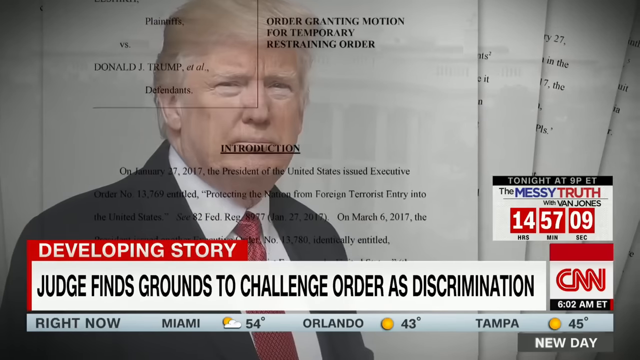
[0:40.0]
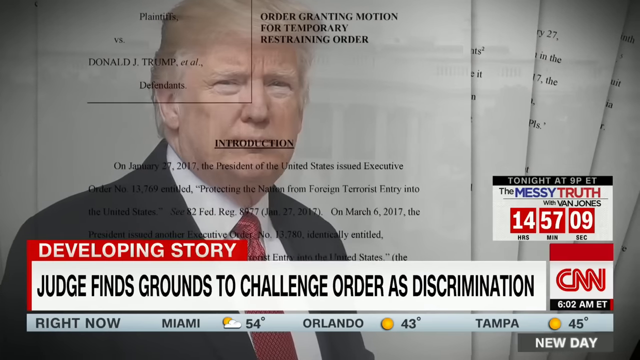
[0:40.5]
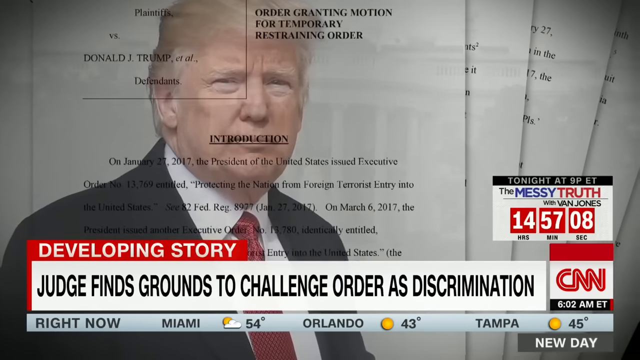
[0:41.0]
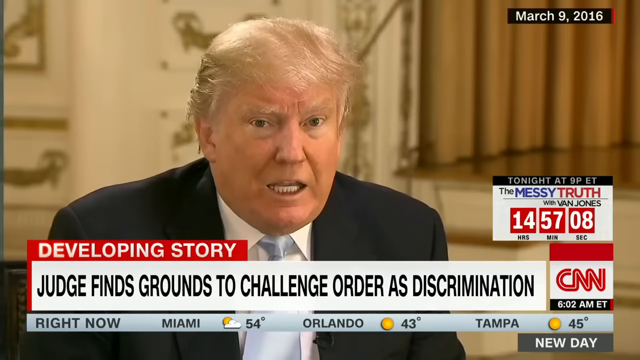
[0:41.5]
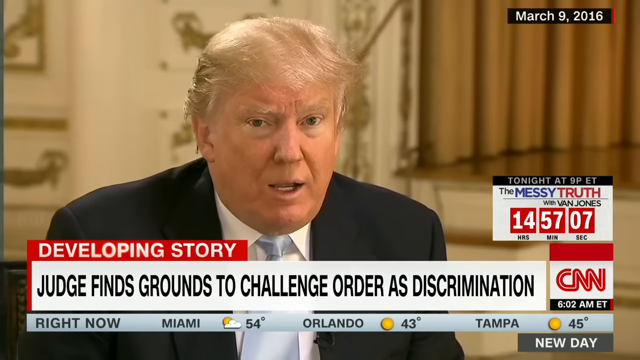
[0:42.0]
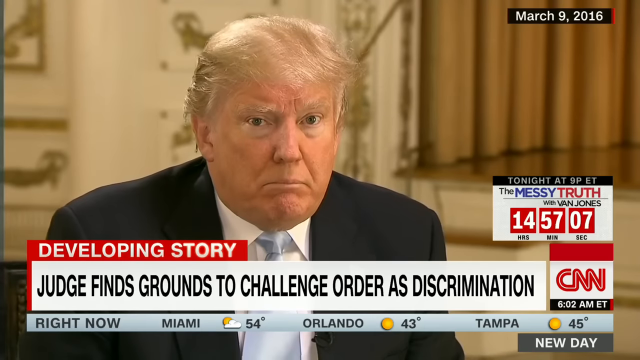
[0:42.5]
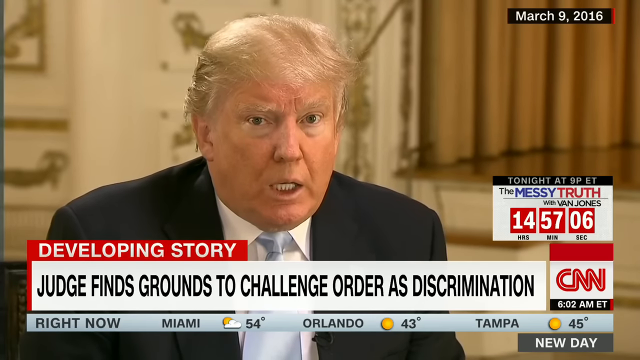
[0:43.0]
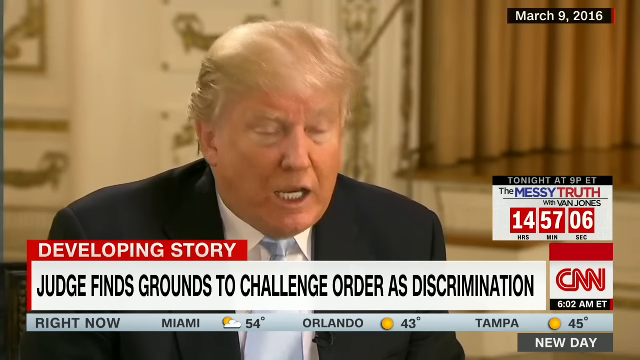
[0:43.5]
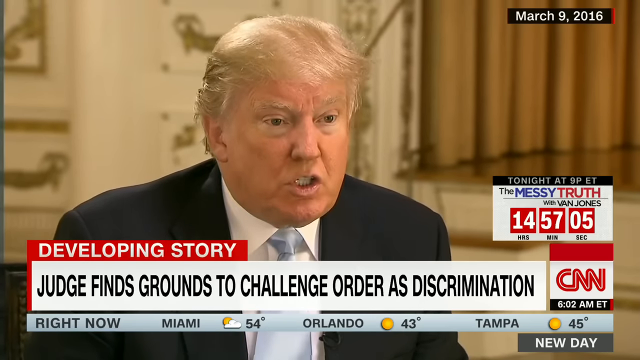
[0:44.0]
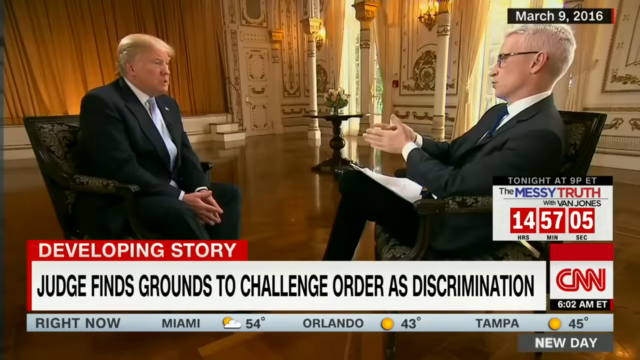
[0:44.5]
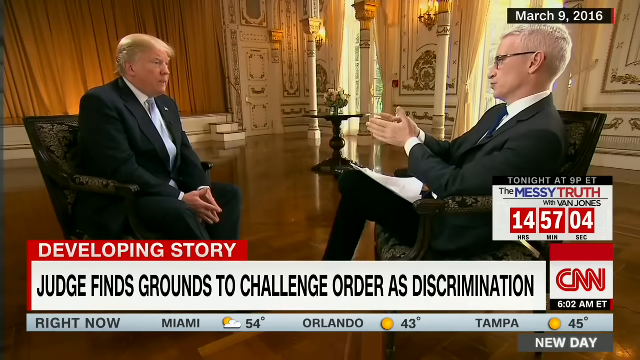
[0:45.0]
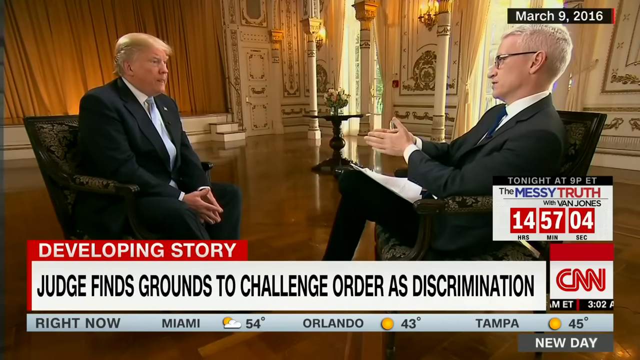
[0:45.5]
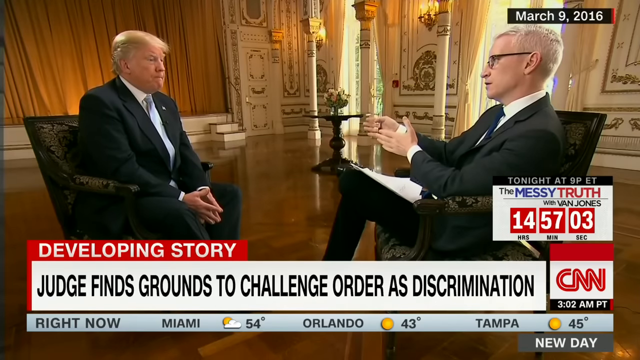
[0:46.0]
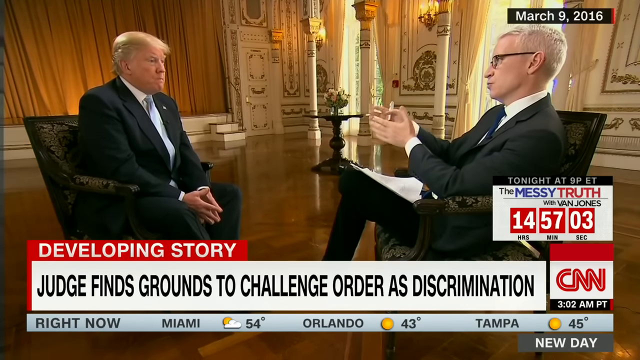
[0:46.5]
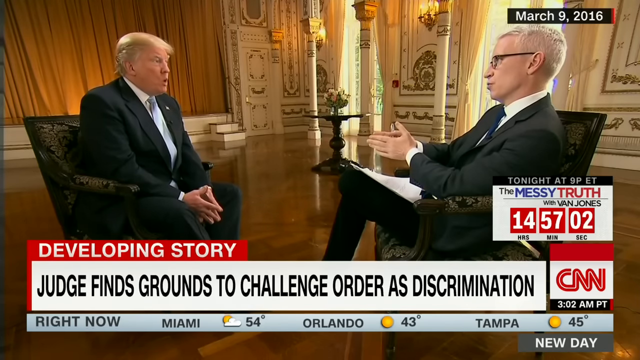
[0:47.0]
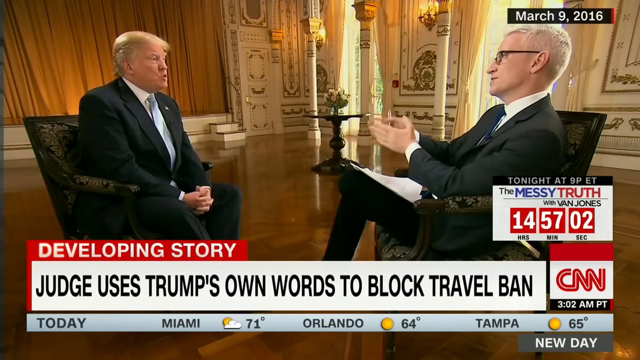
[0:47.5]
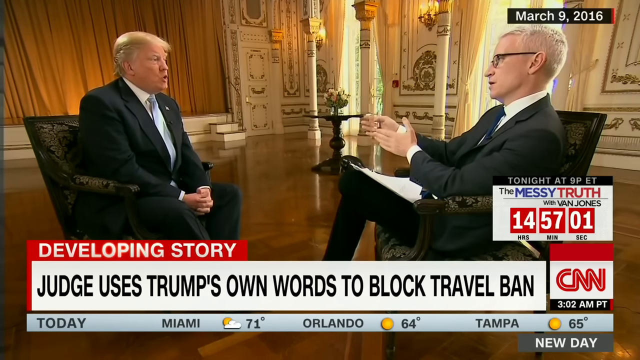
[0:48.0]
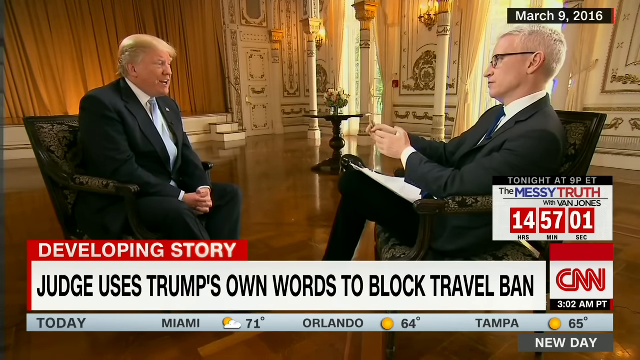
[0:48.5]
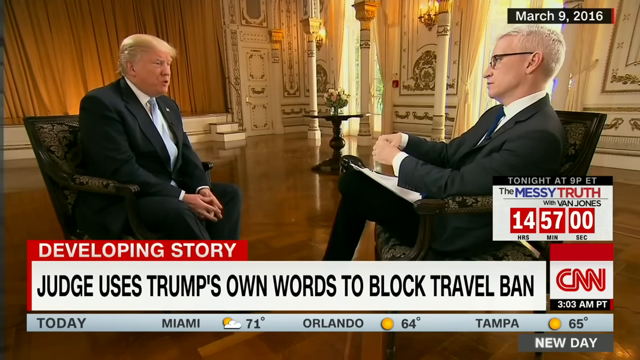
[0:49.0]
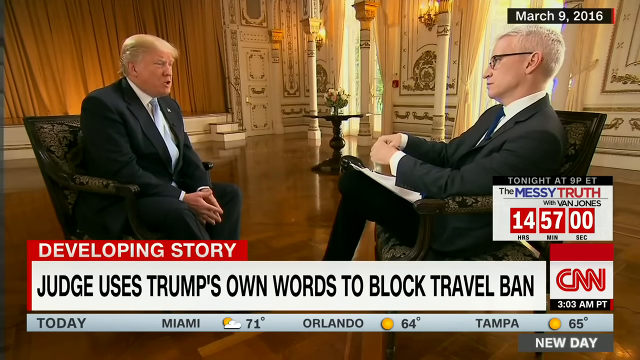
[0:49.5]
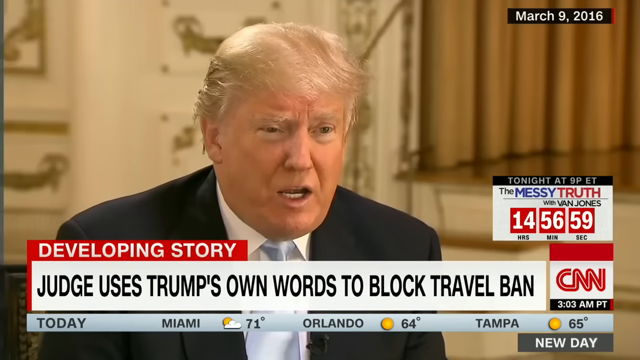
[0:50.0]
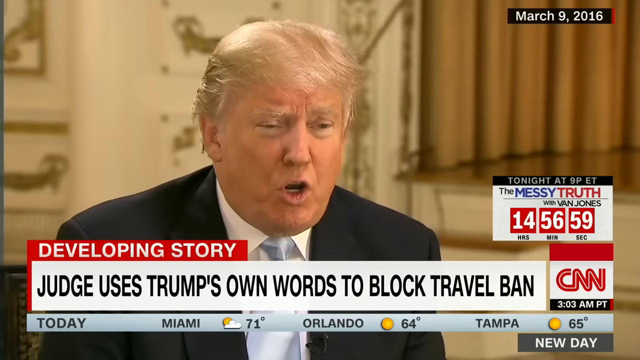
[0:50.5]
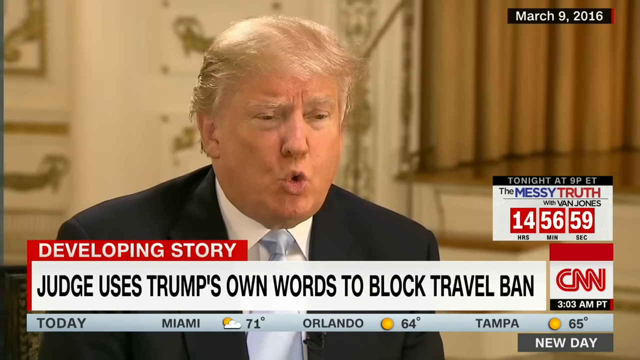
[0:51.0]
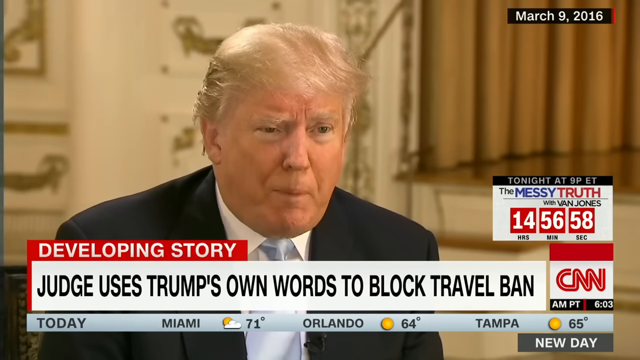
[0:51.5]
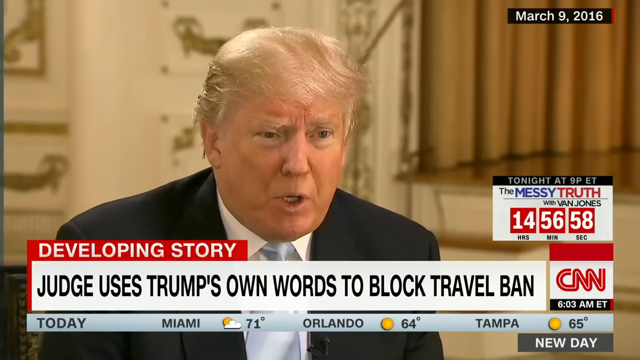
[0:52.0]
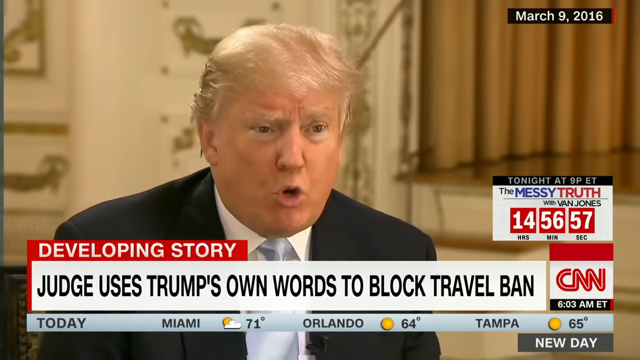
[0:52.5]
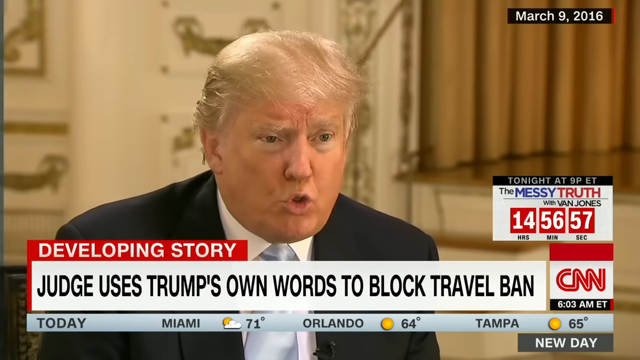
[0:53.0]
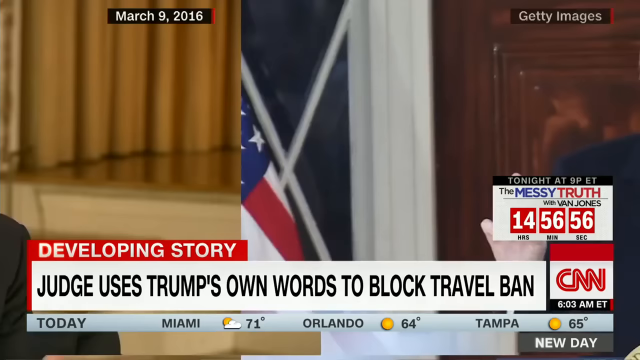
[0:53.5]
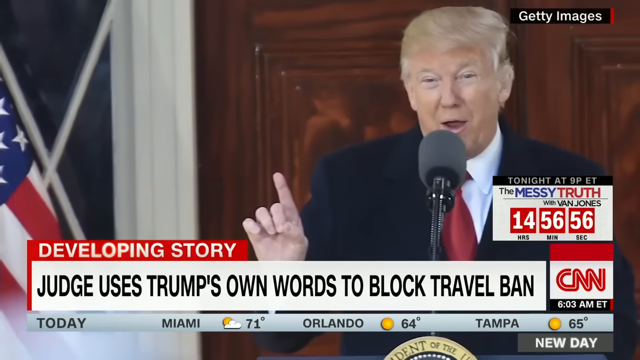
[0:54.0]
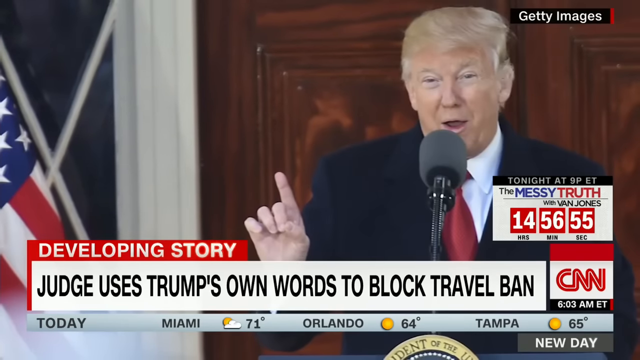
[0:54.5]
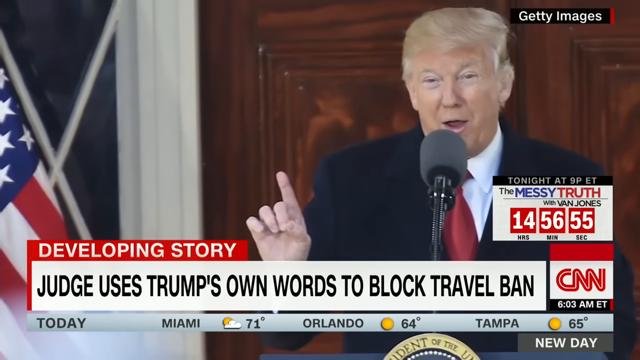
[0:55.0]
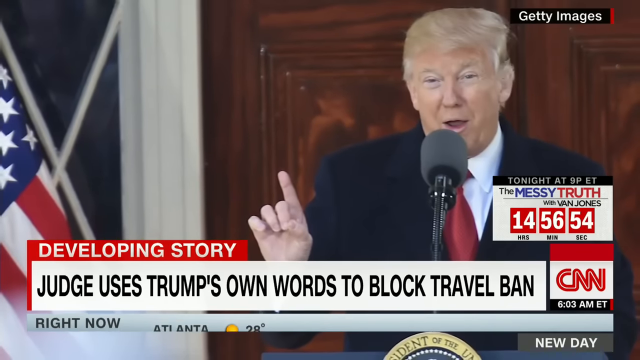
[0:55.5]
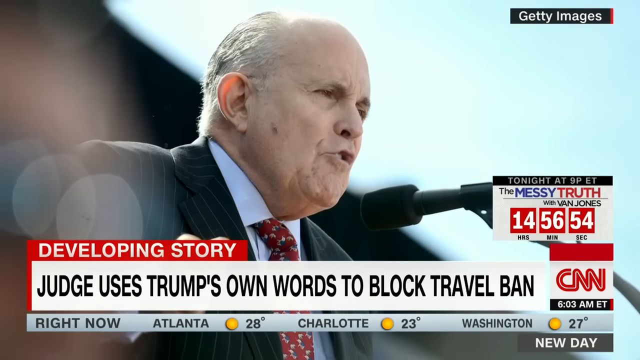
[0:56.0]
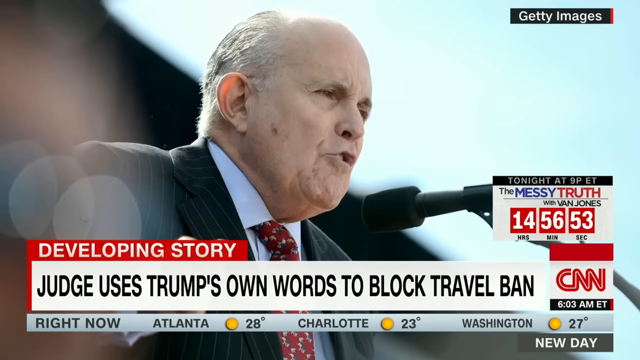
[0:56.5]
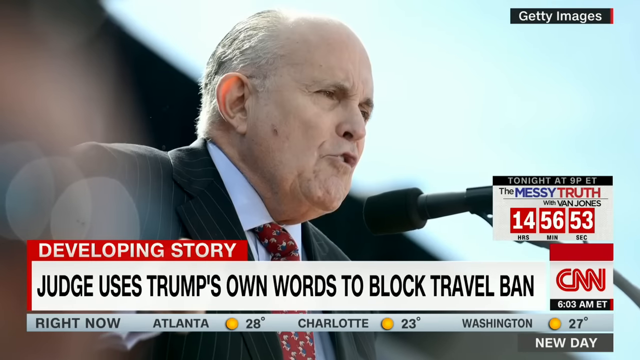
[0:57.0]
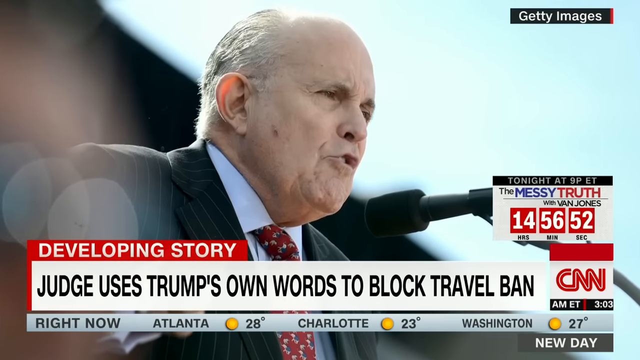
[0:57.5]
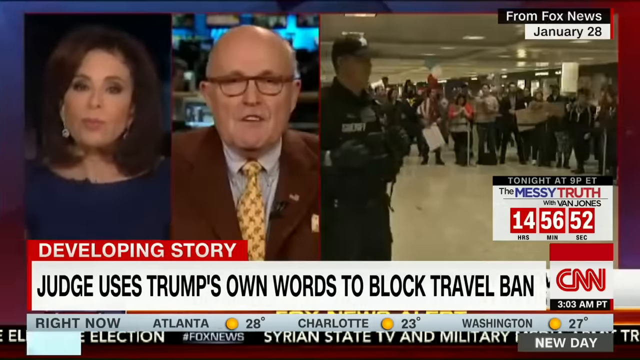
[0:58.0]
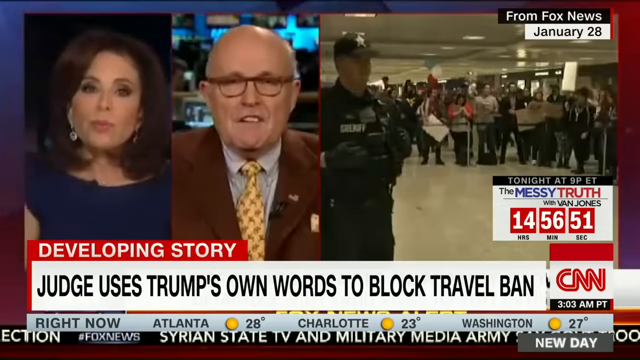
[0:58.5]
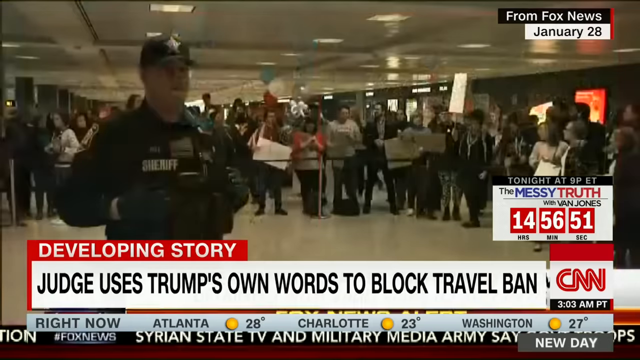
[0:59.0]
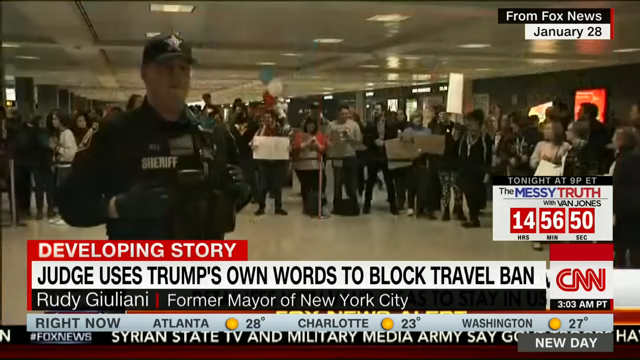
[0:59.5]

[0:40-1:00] The news story focuses on a lawsuit over Donald Trump's travel ban. The text of the lawsuit scrolls across the screen and fades out. Then an interview with Donald Trump conducted by Anderson Cooper of CNN is shown, followed by a still photo of Trump with a smug look on his face and one finger pointed in the air. Next comes a still image of an unidentified person, then a Fox News clip of Rudy Giuliani being interviewed about the travel ban. A police officer decked out in paramilitary gear stands in front of a crowd of people. Then the legal document of the lawsuit against Trump over the travel ban is shown once again.